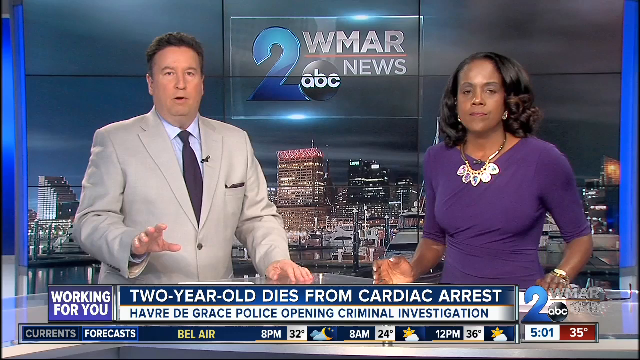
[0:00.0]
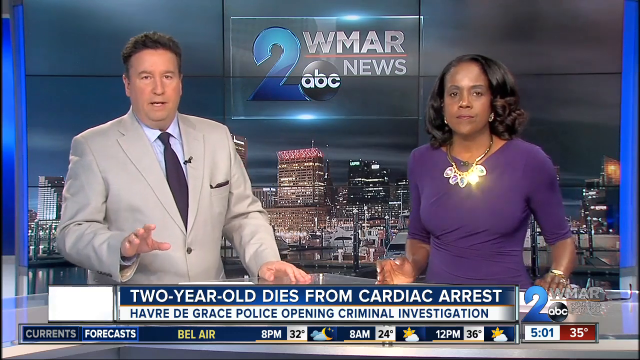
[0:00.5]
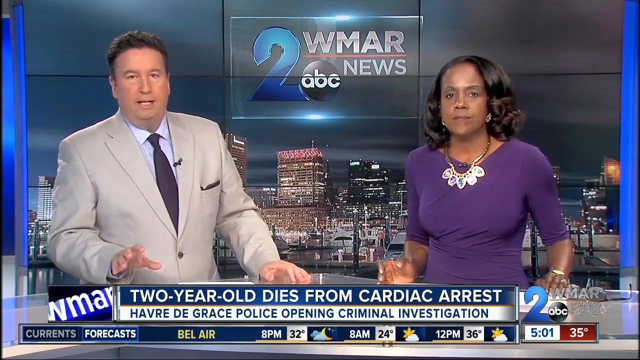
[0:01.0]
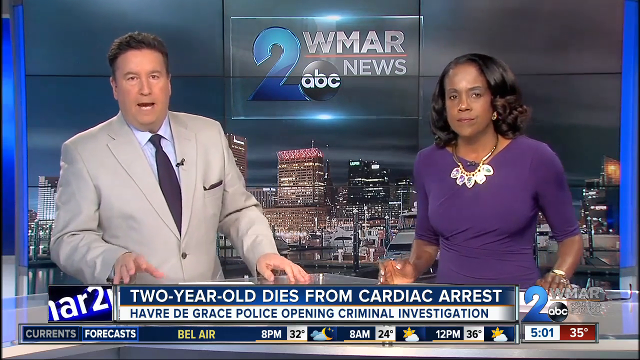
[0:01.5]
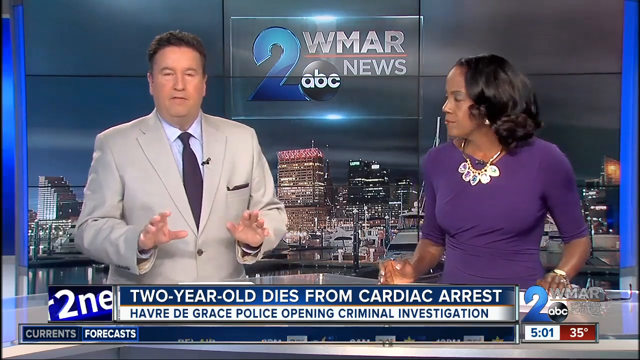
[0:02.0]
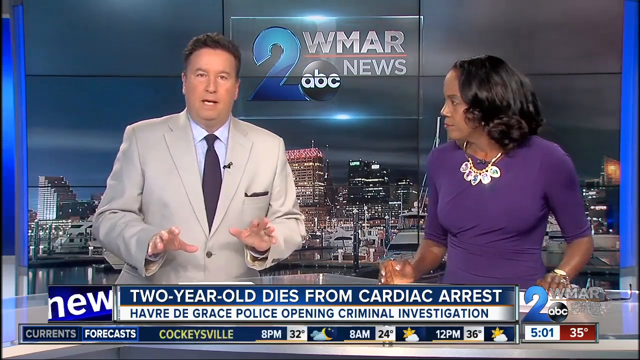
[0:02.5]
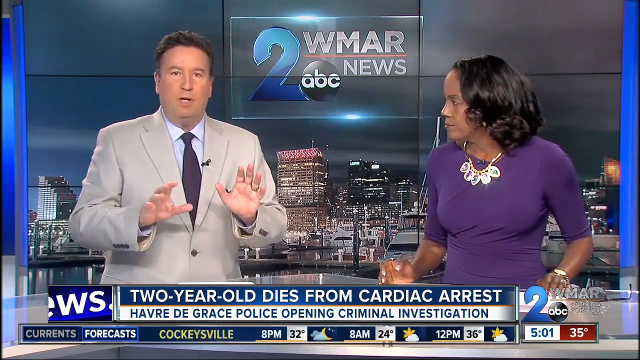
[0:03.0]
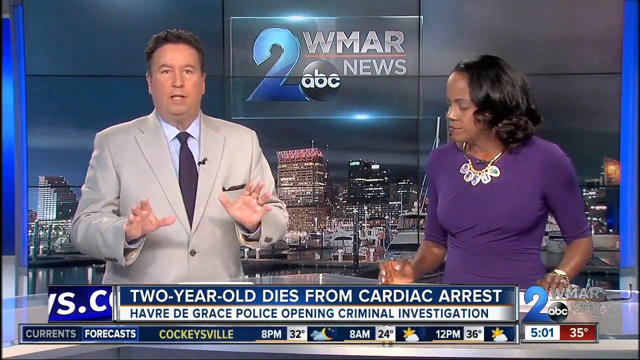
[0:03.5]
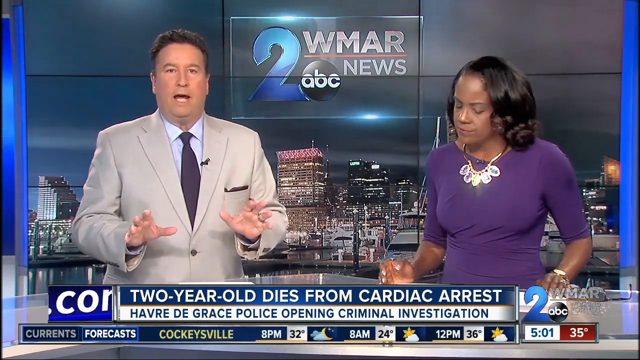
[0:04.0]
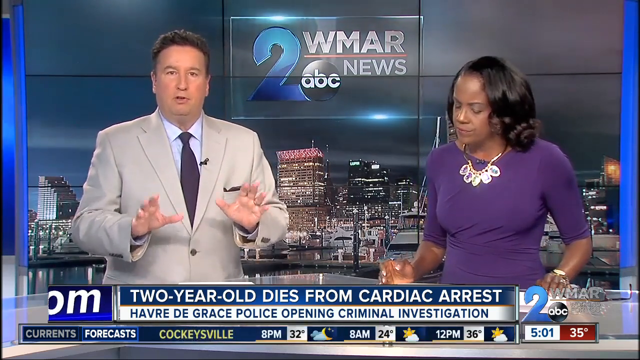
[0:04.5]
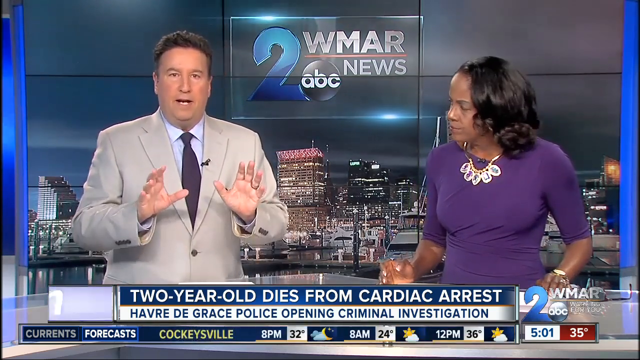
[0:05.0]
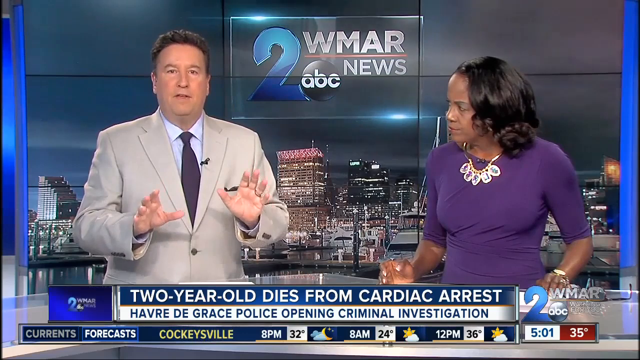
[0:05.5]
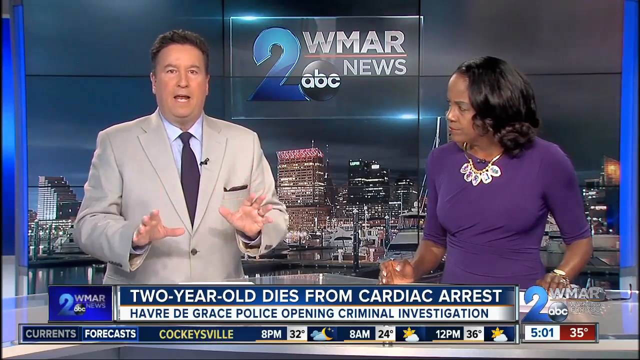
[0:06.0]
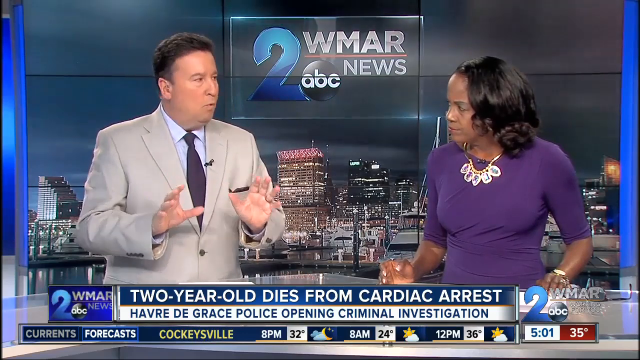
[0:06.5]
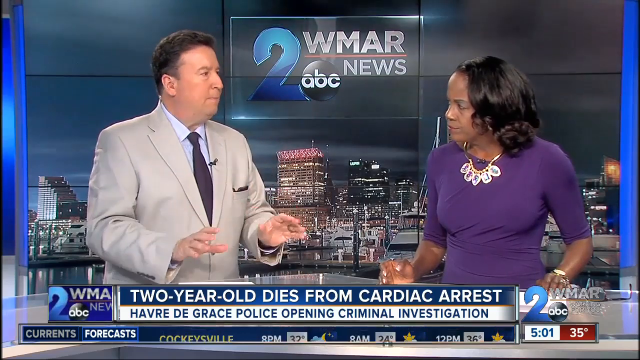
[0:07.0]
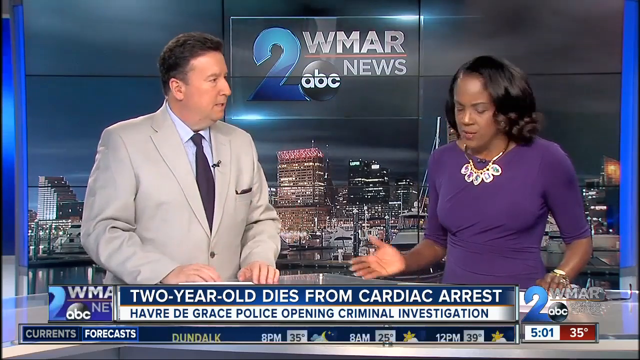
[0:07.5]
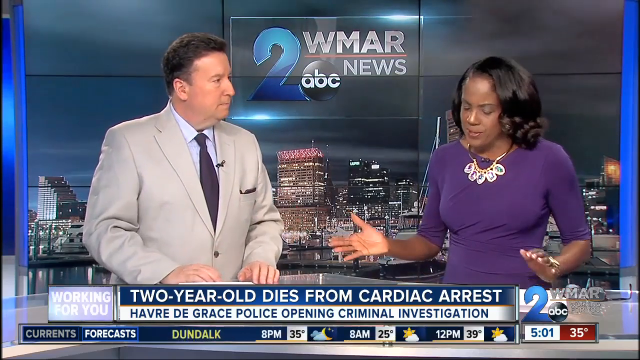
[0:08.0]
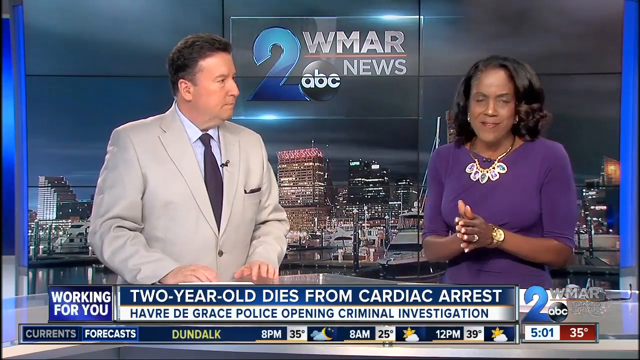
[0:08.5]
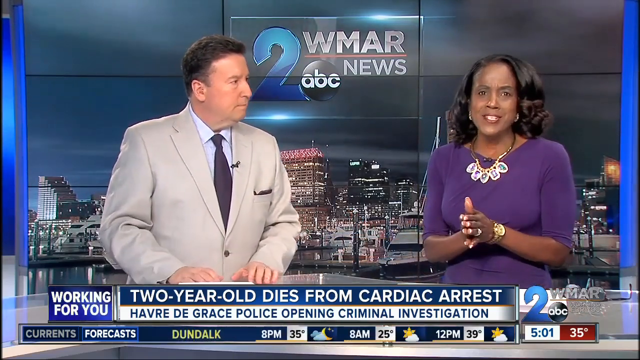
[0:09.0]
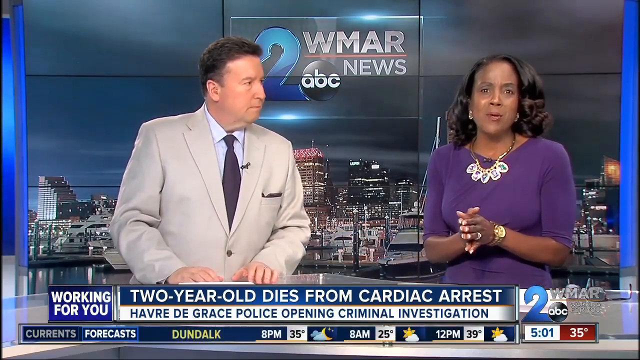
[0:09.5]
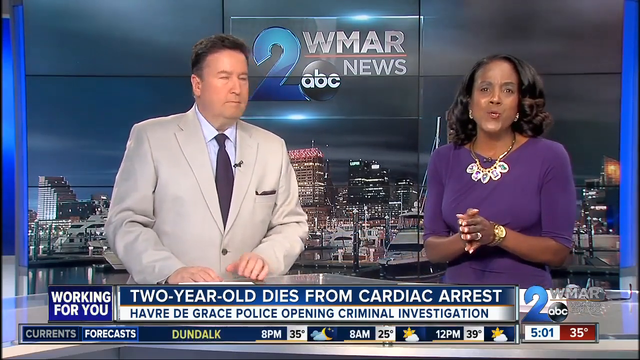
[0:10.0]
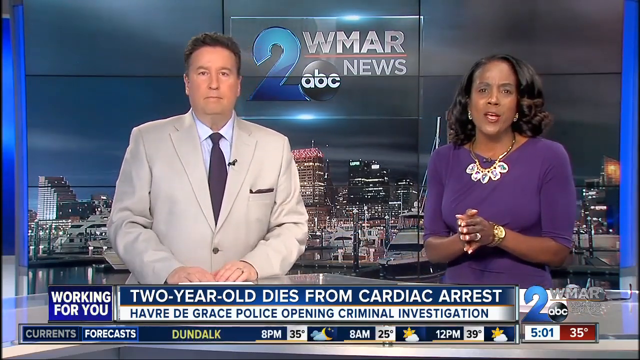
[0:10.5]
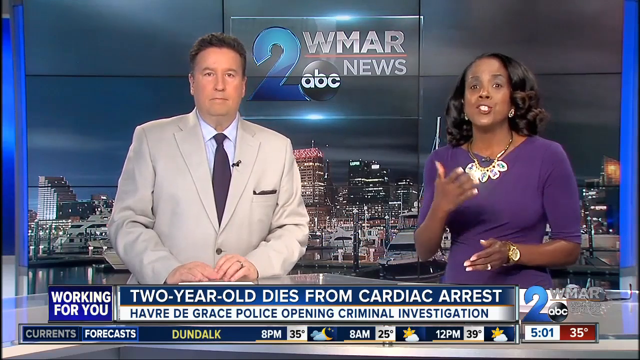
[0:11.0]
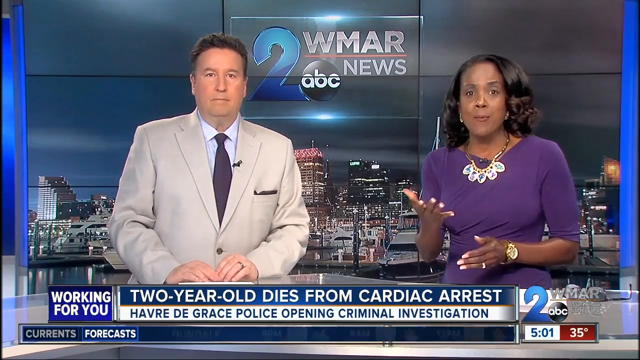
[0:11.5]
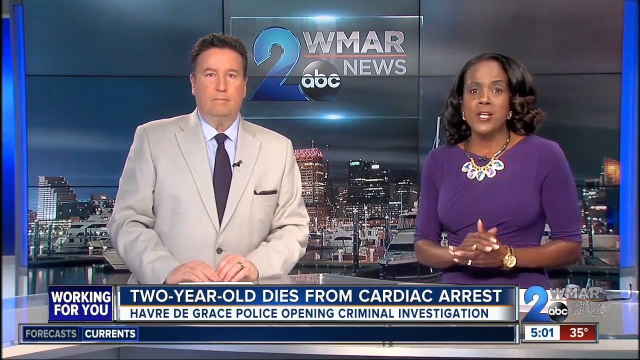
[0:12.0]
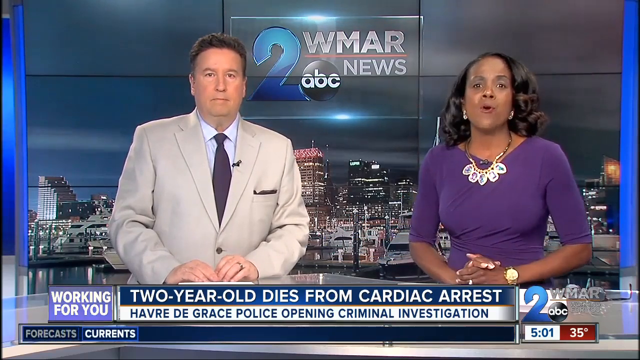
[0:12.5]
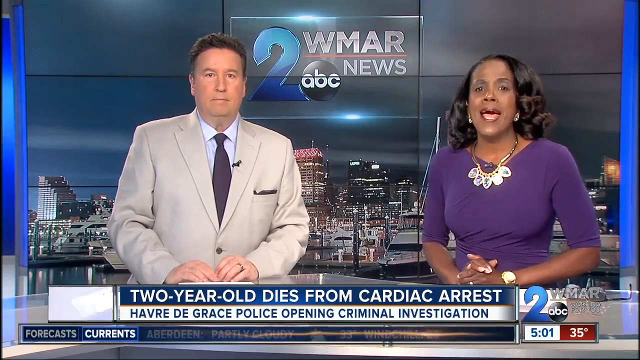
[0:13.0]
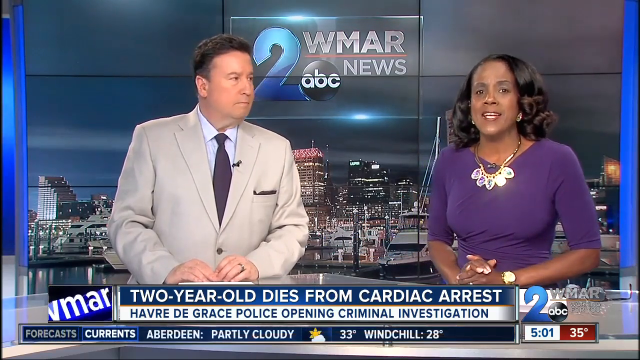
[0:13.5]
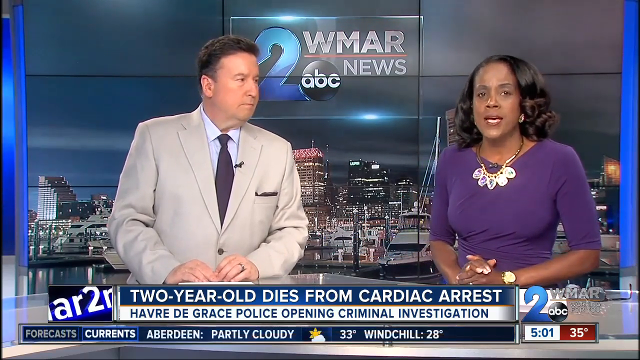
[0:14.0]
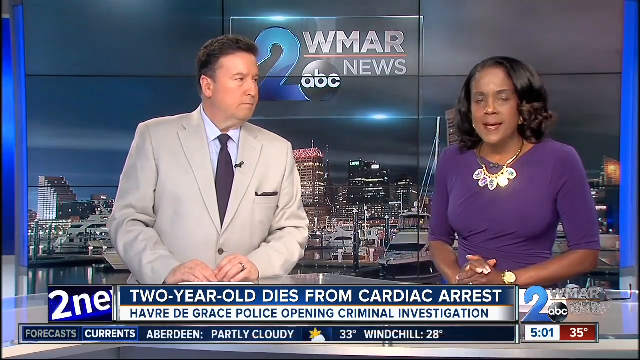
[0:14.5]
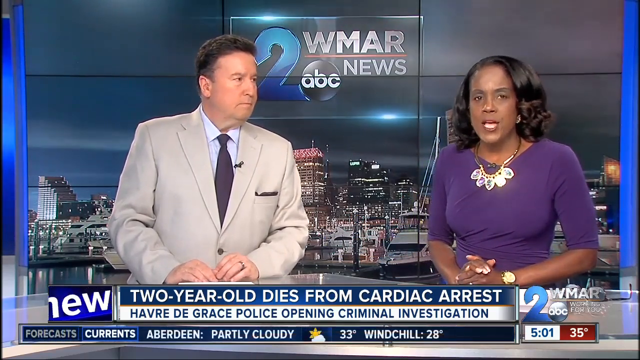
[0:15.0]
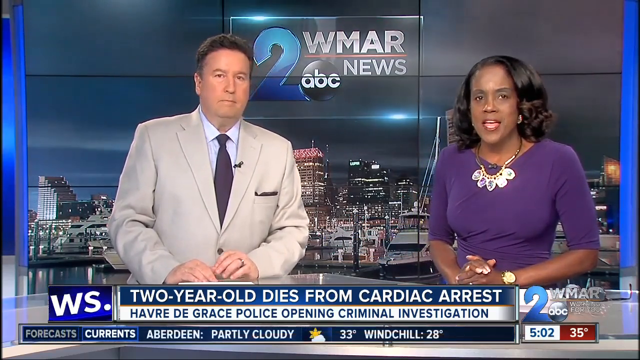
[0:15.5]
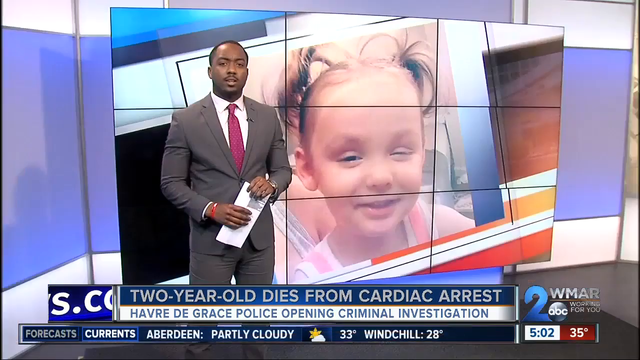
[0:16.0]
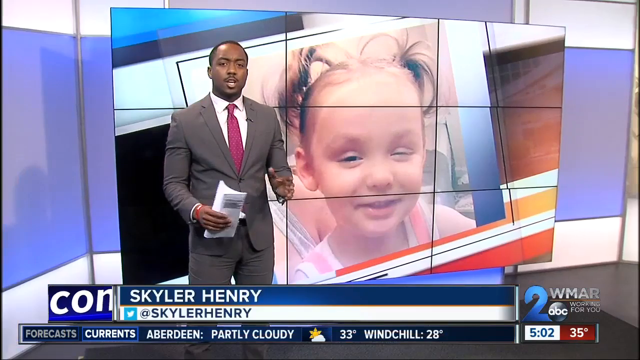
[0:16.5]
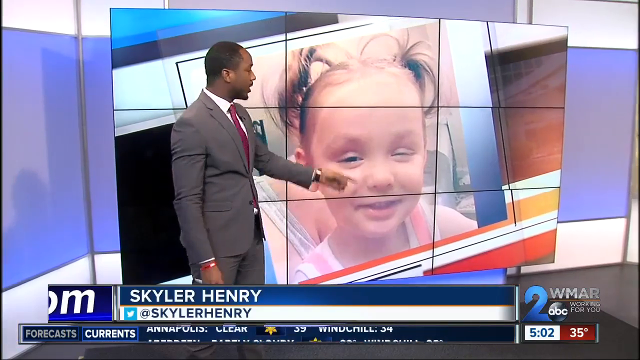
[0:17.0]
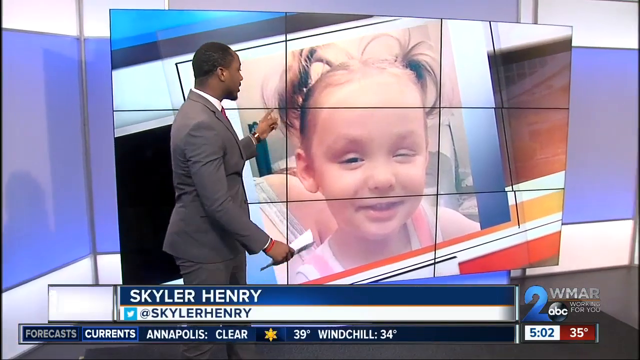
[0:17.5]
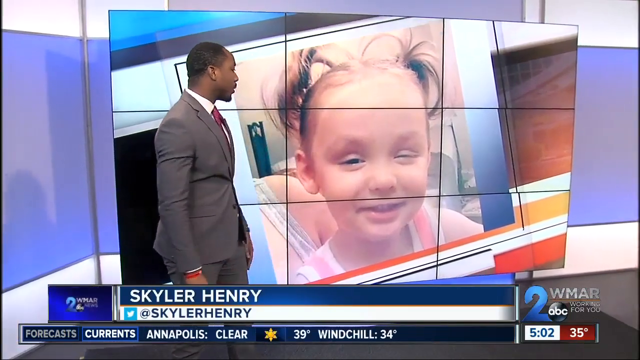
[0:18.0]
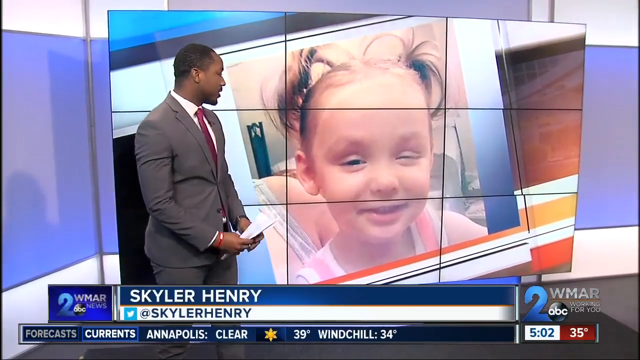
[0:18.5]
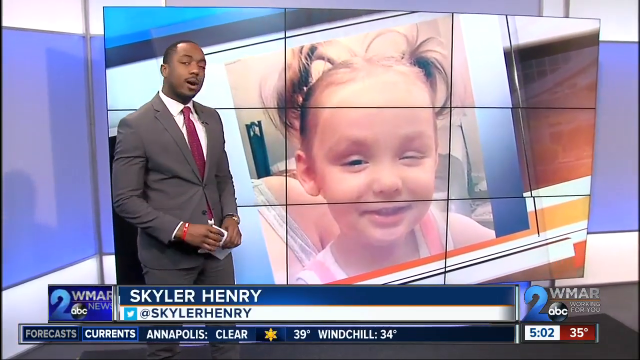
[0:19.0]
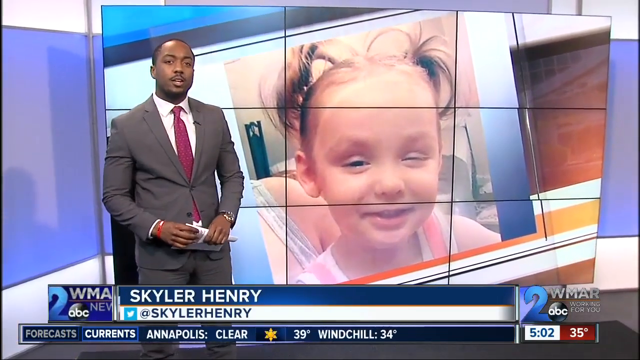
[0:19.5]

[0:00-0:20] The video is a Channel 2 News, Channel 2 ABC broadcast with two news anchors: a woman in a purple dress and a man in something like a silver blazer, with a purple tie and a white shirt. On-screen text reads "two-year-old dies from cardiac arrest" and "Harvey Day Grace Police opening criminal investigation." A weather forecast runs at the bottom of the screen. The anchors have small mics attached at the top of their blazer and dress, and they talk with their hands a lot. The woman wears a watch, and both anchors wear rings. Another news anchor, Scholar Henry, then appears, showing the little girl who died from cardiac arrest.